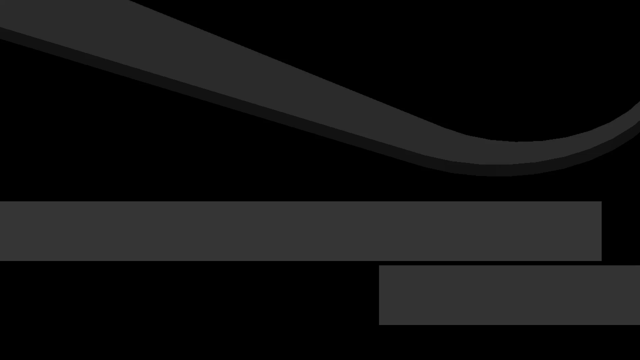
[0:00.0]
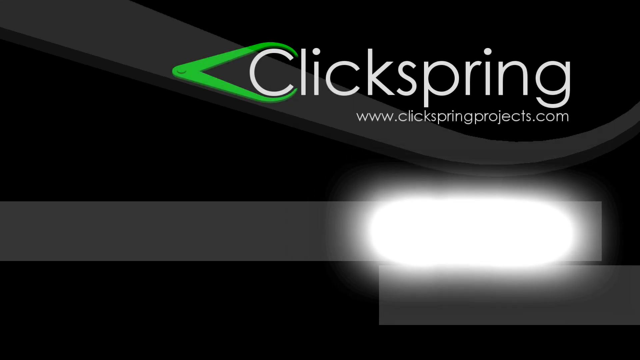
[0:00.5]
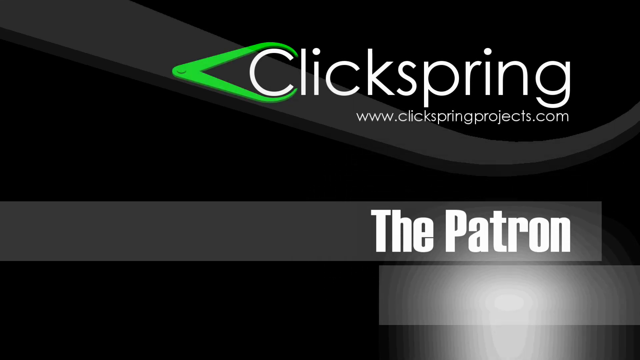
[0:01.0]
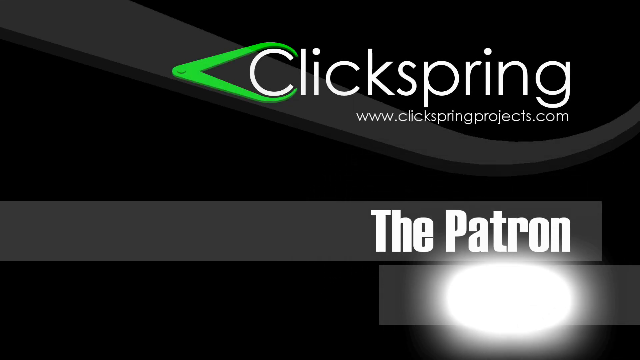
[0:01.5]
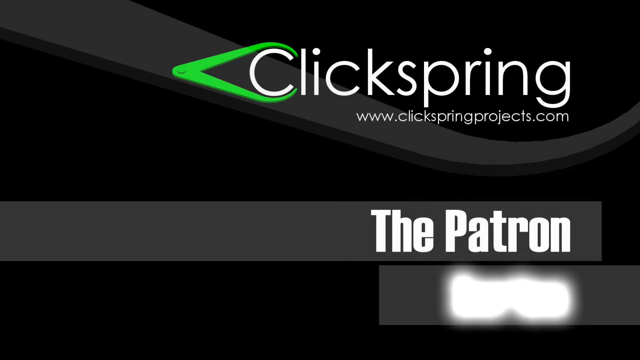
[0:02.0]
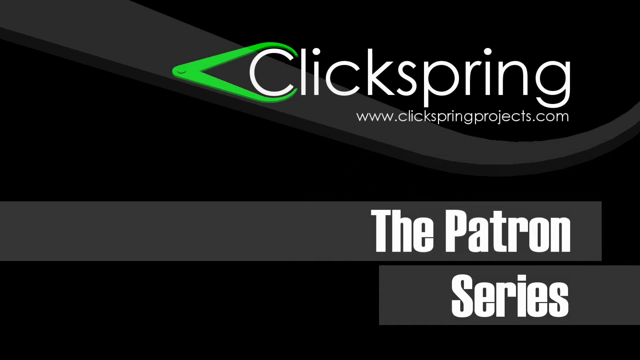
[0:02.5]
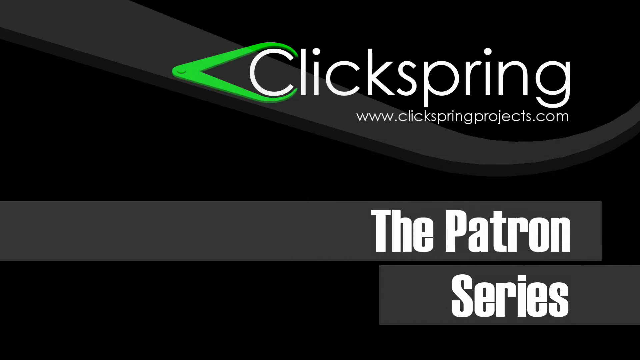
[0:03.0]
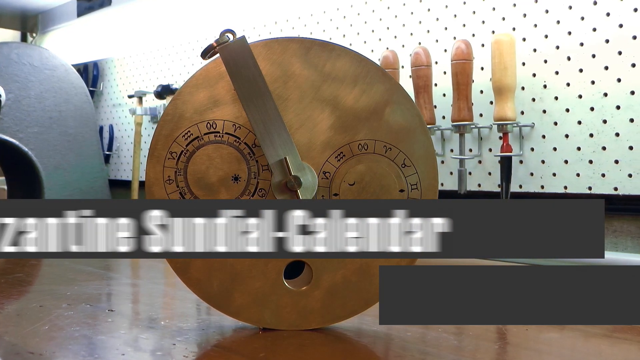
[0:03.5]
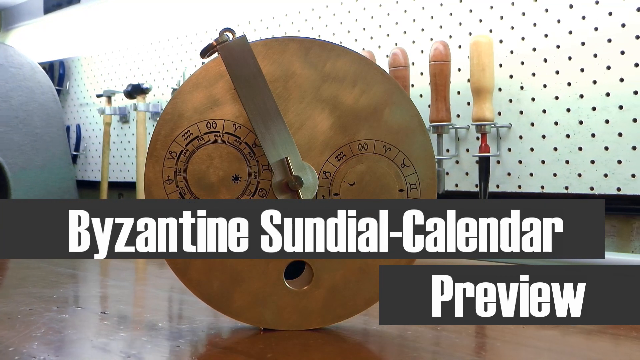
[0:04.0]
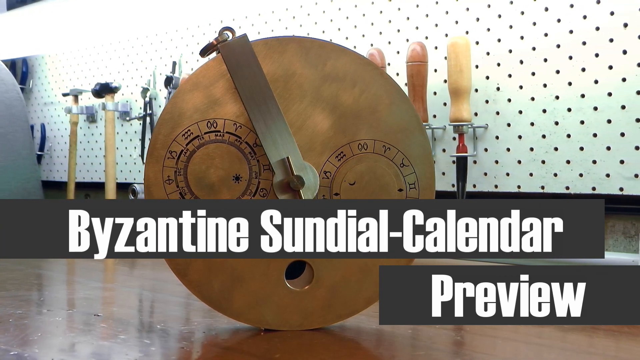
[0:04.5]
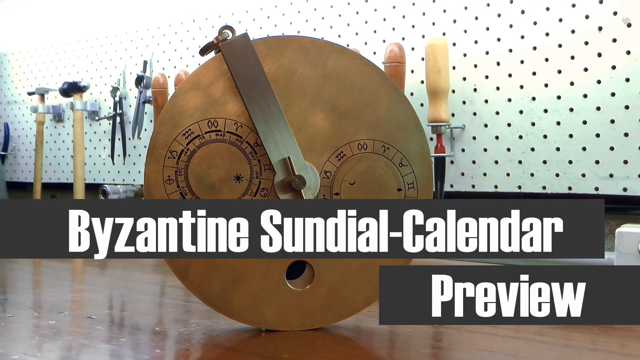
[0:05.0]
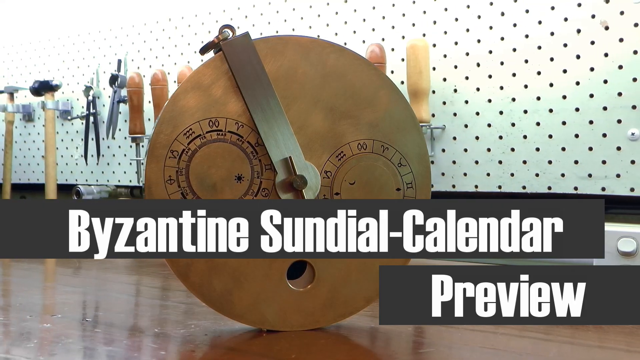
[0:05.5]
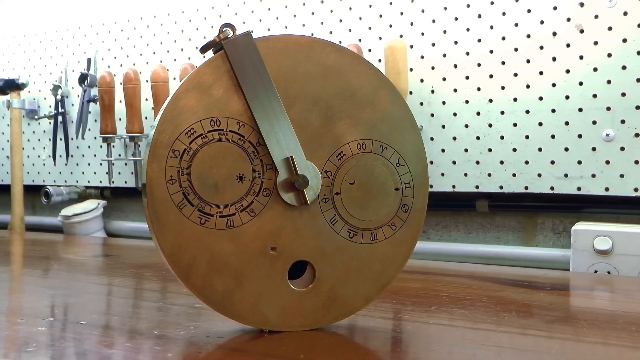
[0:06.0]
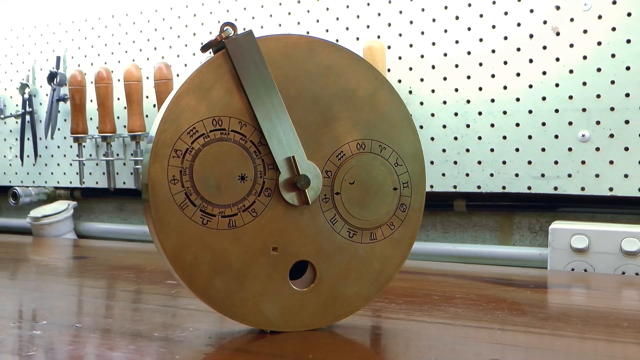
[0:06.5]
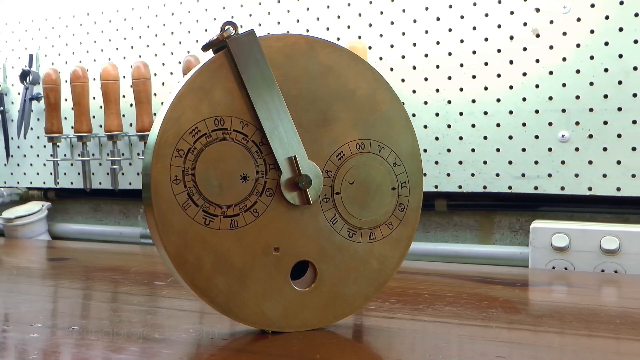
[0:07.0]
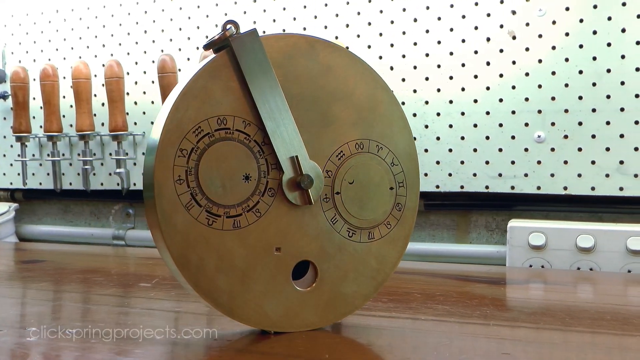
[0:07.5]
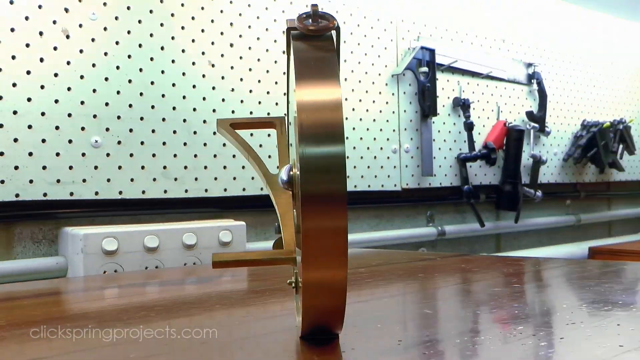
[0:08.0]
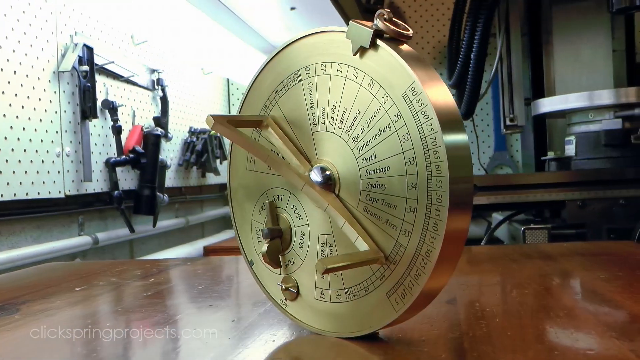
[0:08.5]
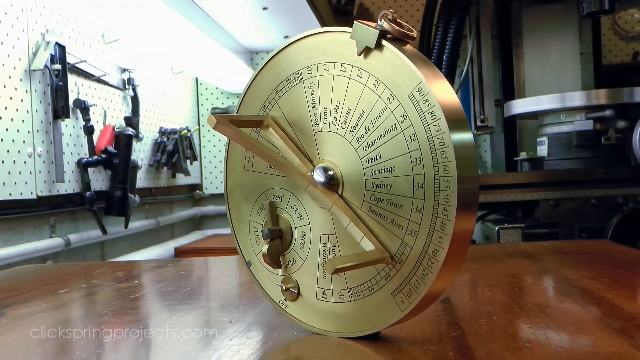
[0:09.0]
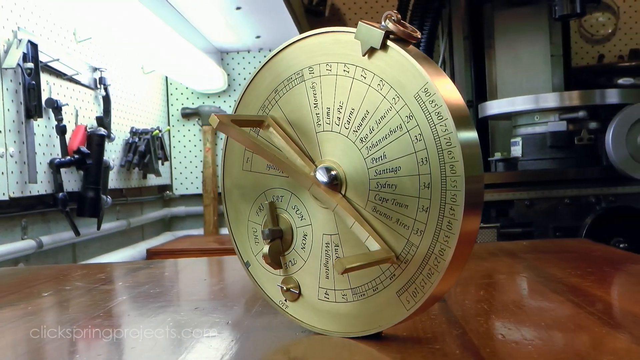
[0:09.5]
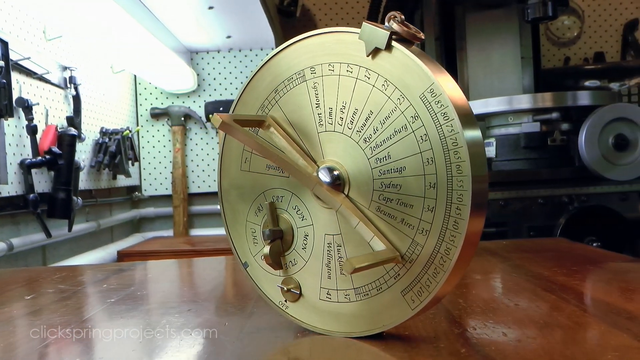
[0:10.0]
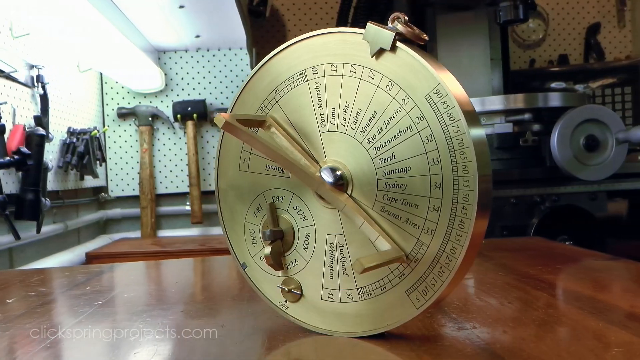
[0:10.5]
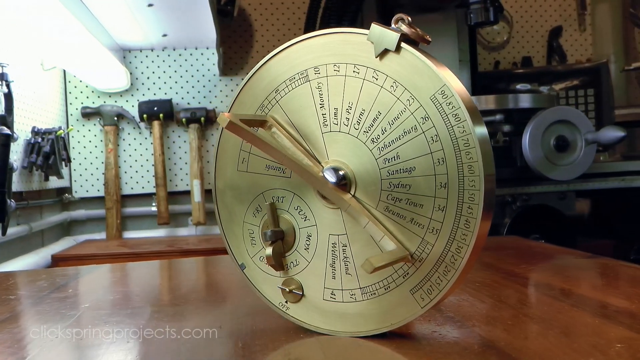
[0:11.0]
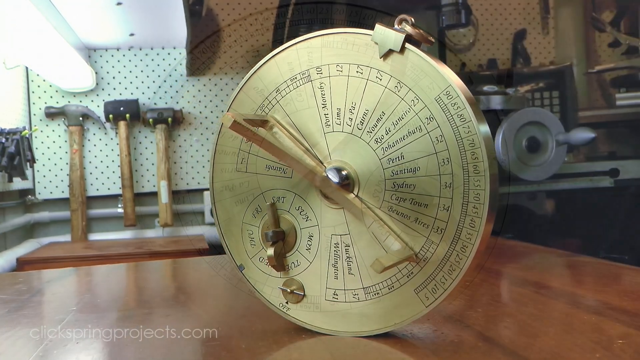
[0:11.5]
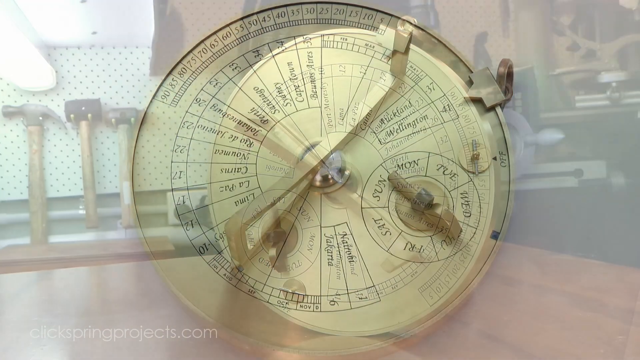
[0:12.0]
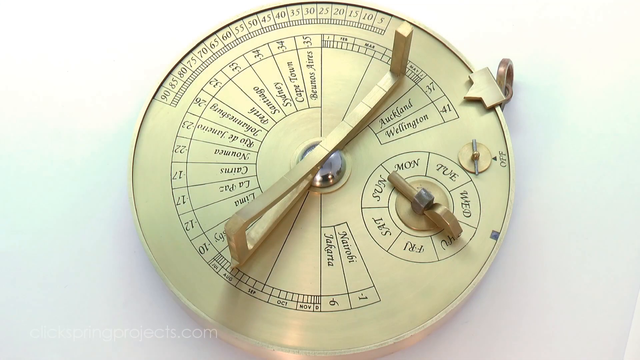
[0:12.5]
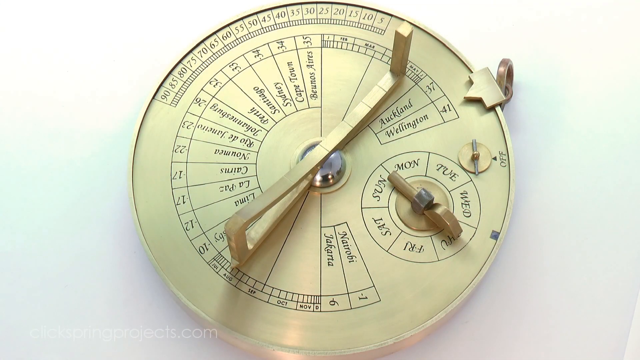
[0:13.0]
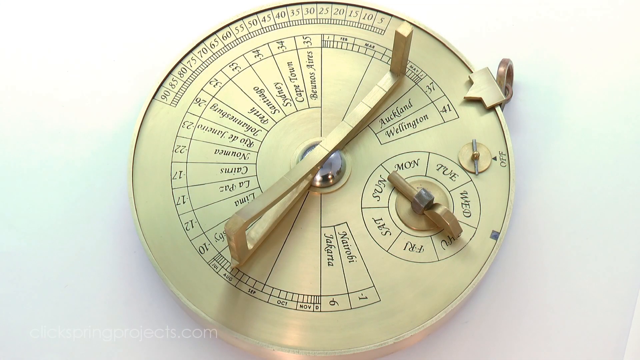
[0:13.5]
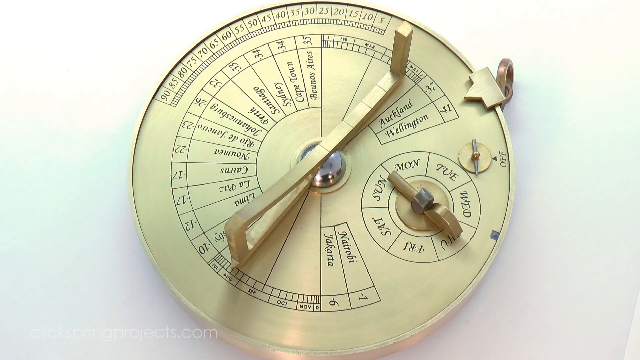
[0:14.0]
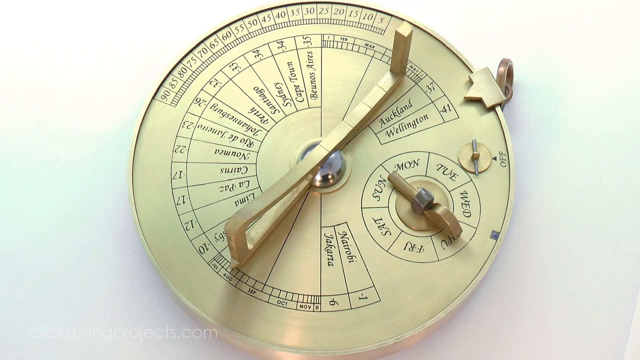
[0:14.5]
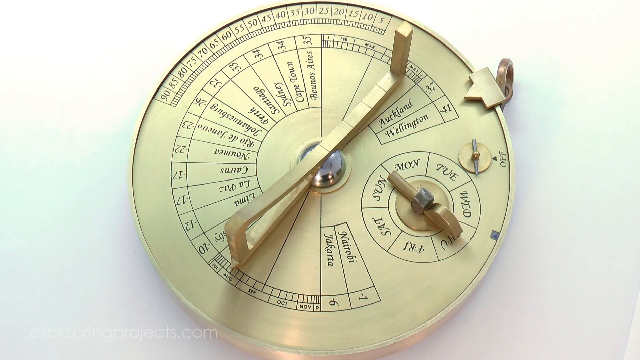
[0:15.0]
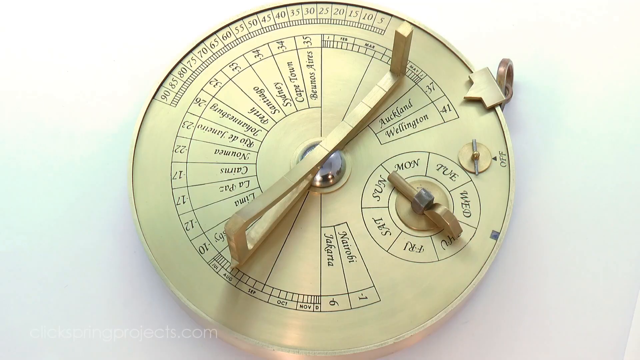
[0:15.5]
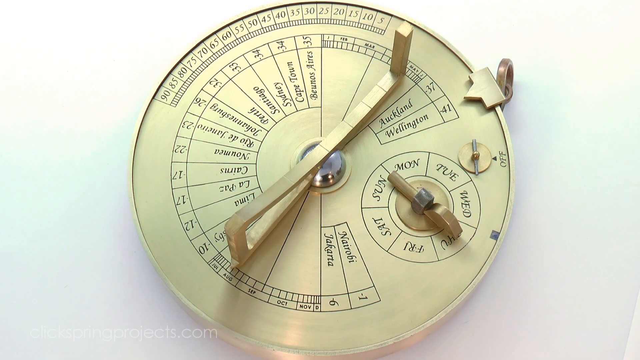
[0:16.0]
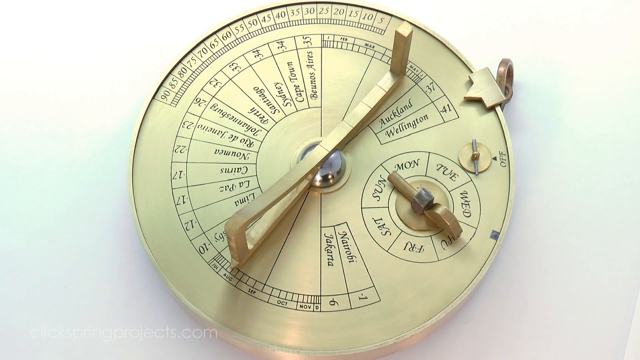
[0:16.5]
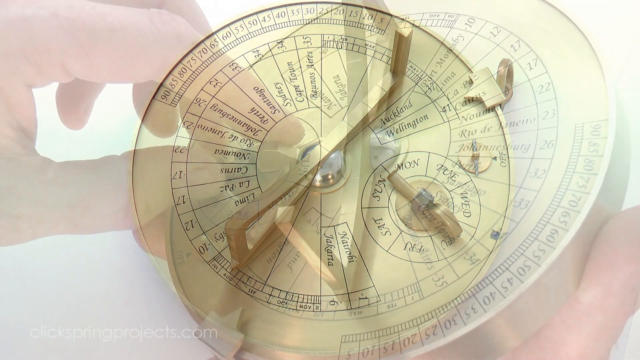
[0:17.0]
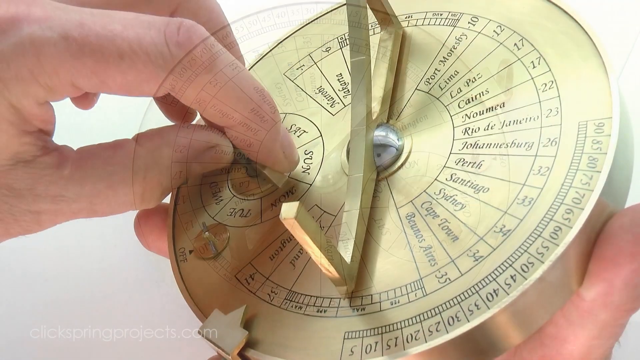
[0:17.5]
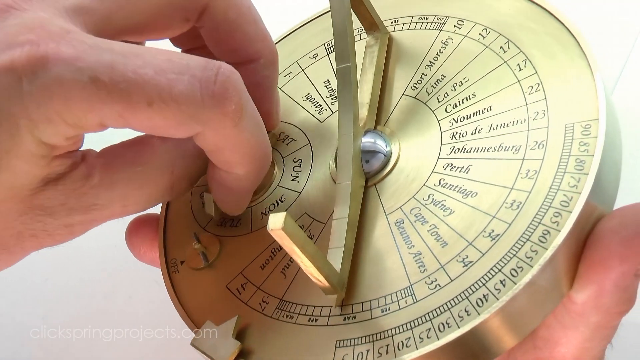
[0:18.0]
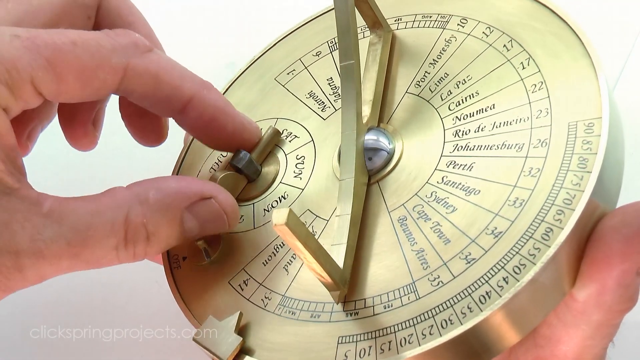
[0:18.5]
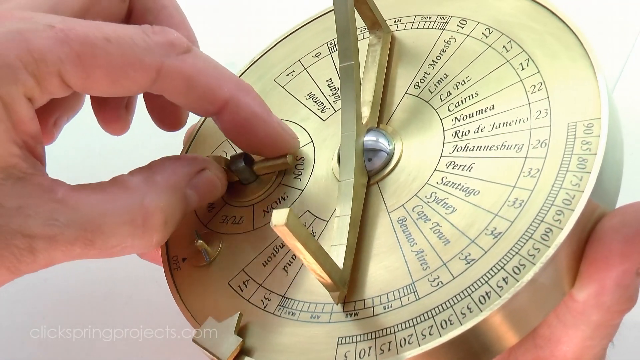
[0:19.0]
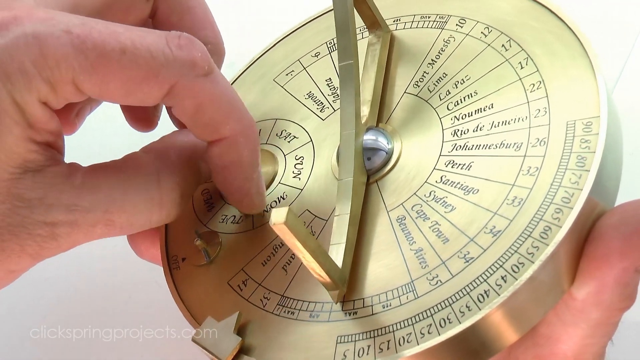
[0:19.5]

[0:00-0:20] The video opens with "The Patron Series" and www.clickspringproject.com. It then moves to a Byzantine sundial calendar preview: a gold circular object, a sundial, is shown in front and back views sitting on a table, with a white wall with tiny holes in it and tools behind it. The back of the sundial has writing on it that appears to give different names for either months or days, and it also has the days written on it: Monday, Tuesday, Wednesday, Thursday, Friday, Saturday, Sunday. Next the sundial is shown flat, and someone turns the different locations of the days on the back.